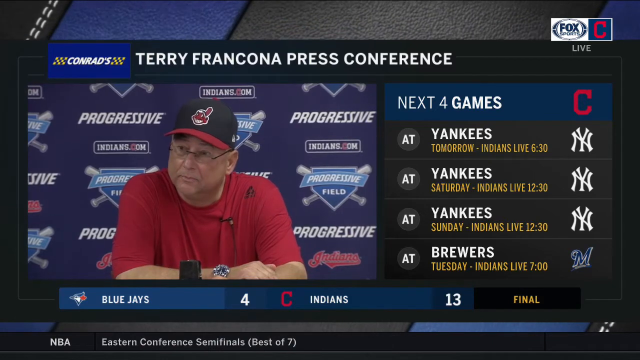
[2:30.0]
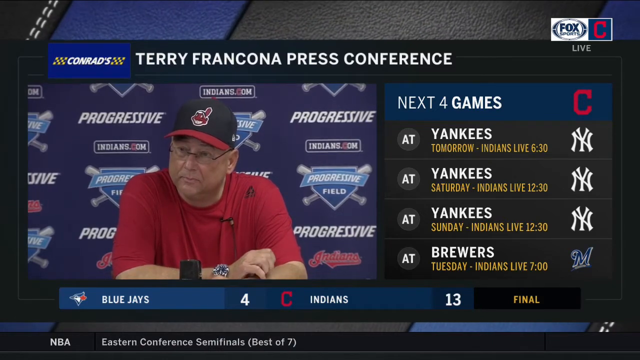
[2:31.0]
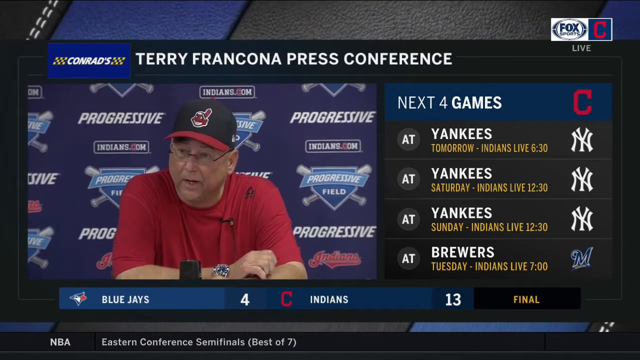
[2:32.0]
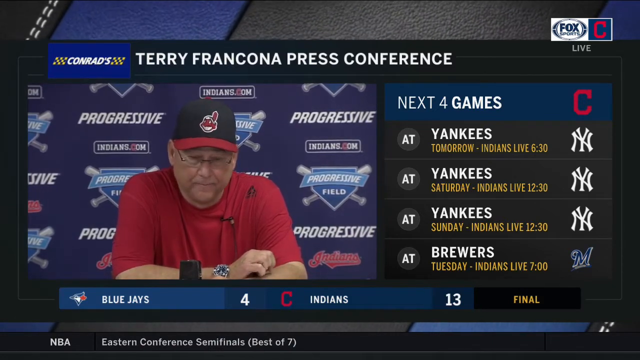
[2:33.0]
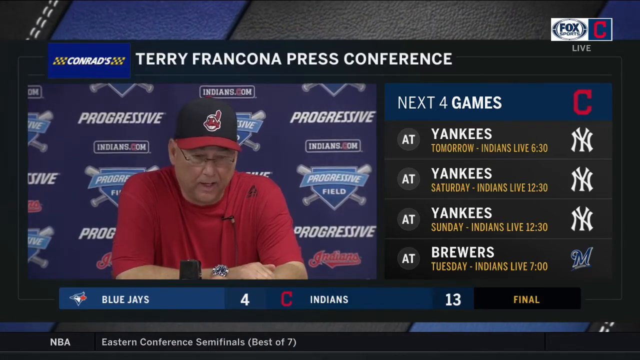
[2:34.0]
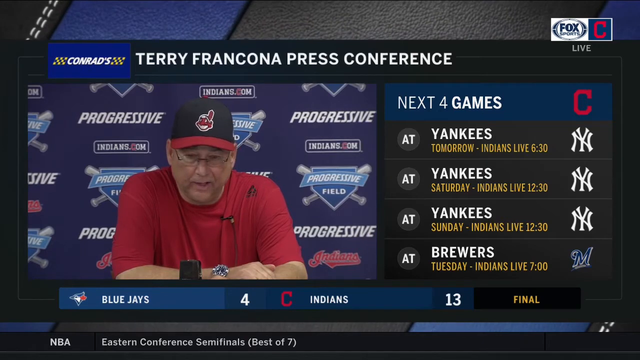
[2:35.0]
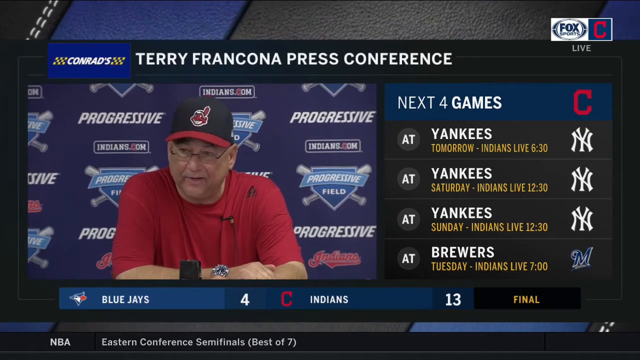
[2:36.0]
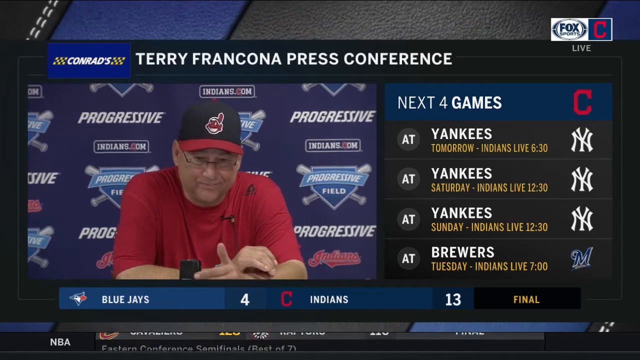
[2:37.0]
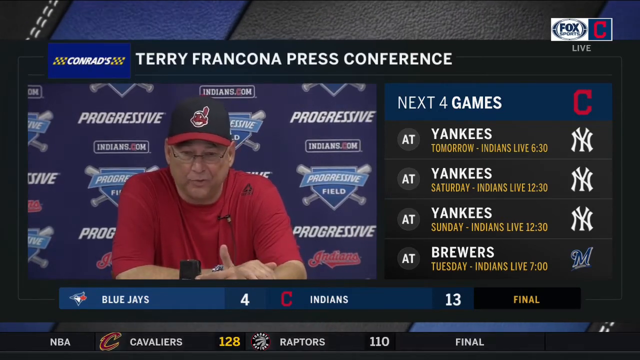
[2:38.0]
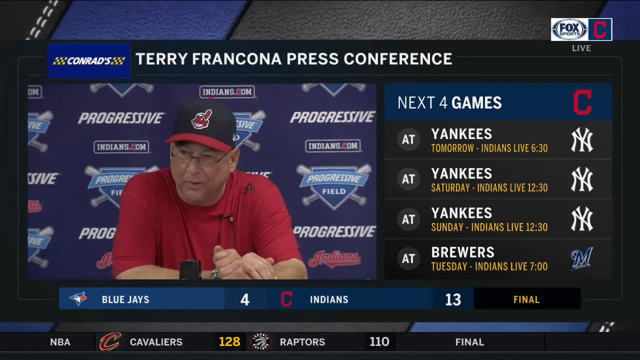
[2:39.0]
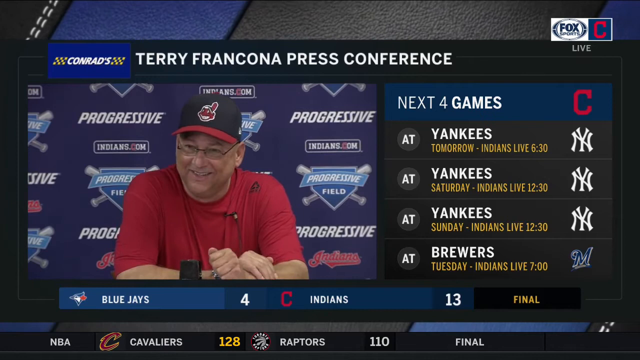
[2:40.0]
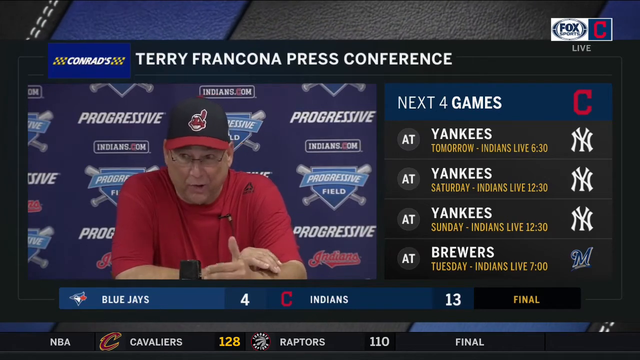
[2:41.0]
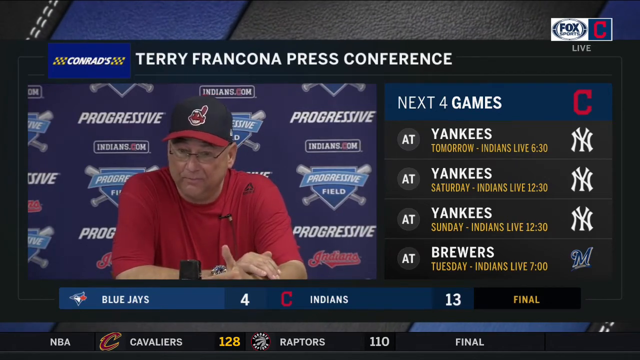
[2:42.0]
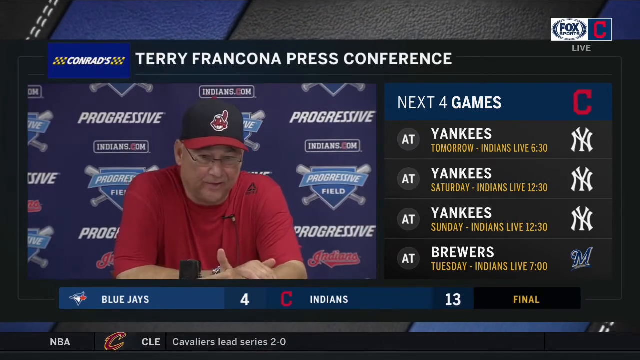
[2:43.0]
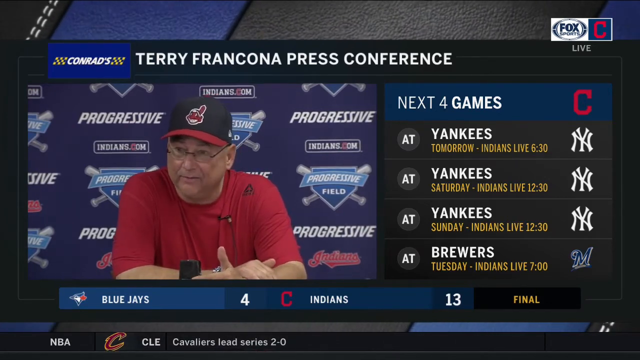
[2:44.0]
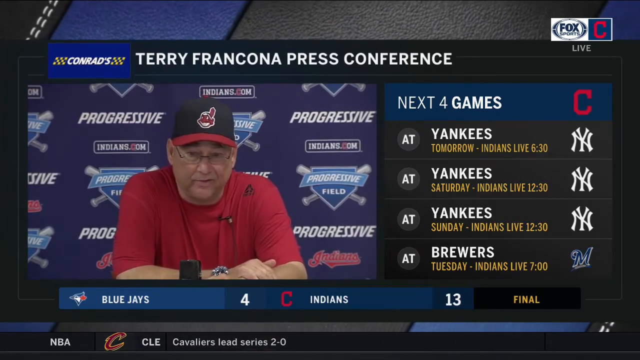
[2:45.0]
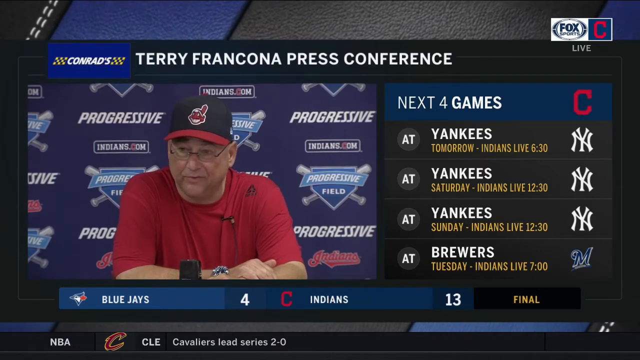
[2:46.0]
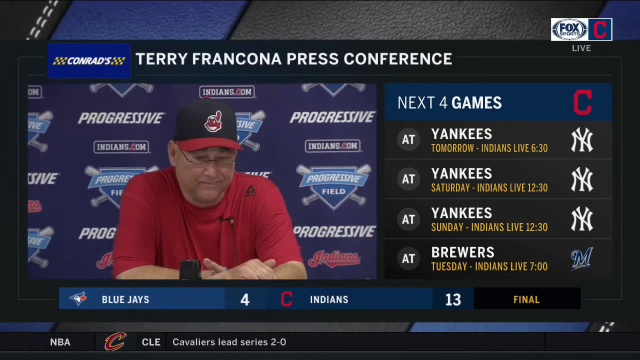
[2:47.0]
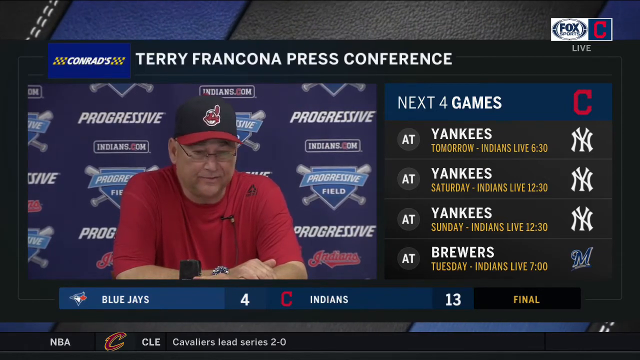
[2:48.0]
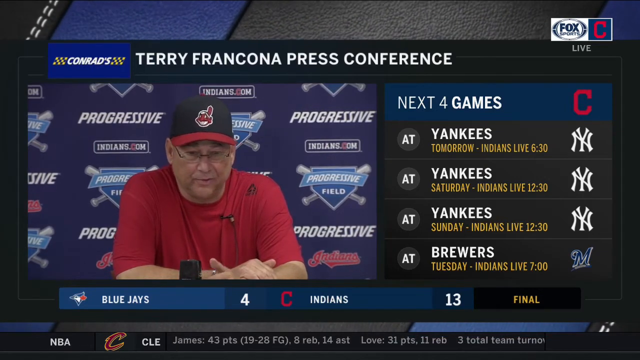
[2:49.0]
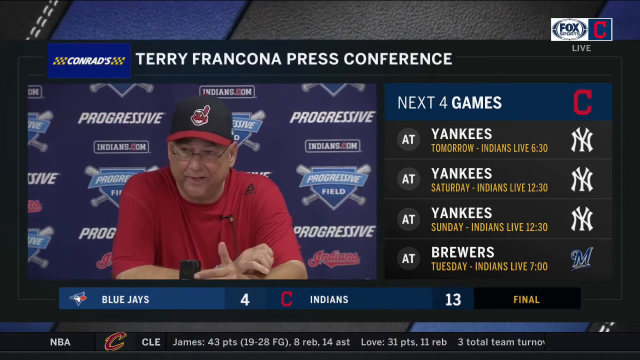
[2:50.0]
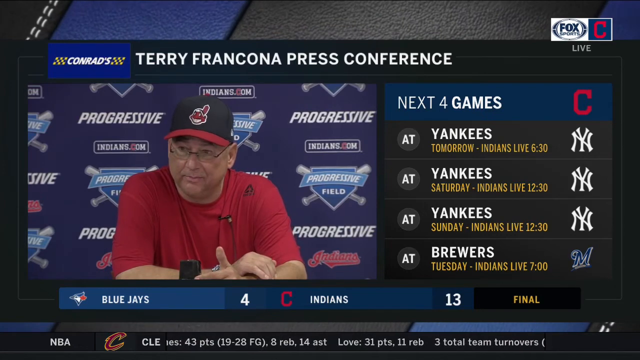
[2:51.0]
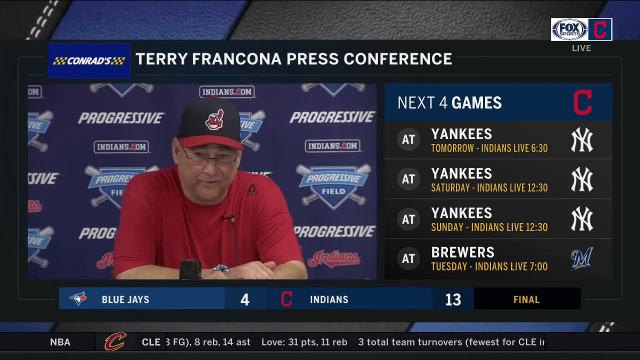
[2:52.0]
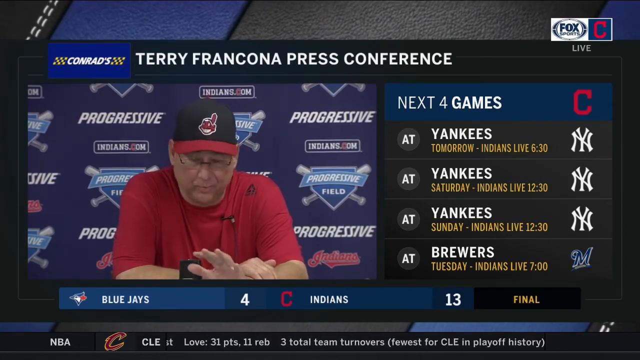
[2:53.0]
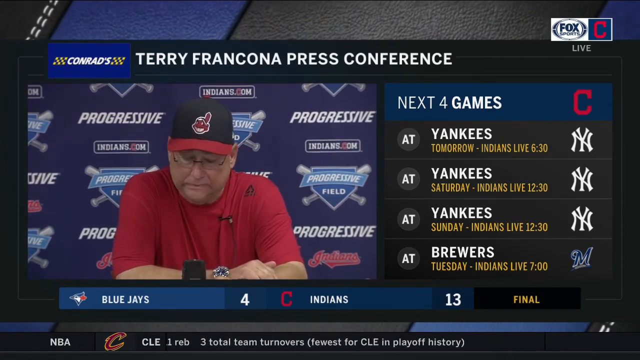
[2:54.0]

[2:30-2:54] The right-hand side now shows information in white reading "next four games," with a big red C, apparently the team logo. The list reads "at Yankees" with "tomorrow" in yellow and "Indians live 6:30"; underneath, "at Yankees Saturday Indians live 12:30"; then "at Yankees Sunday Indians live 12:30"; and the last one, "at Brewers Tuesday Indians live 7." The name Francona and "press conference" are at the top. The man talking is apparently Francona, maybe a coach or general manager, who looks maybe in his 50s.